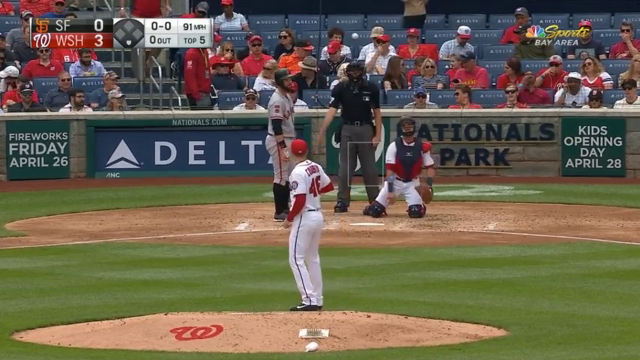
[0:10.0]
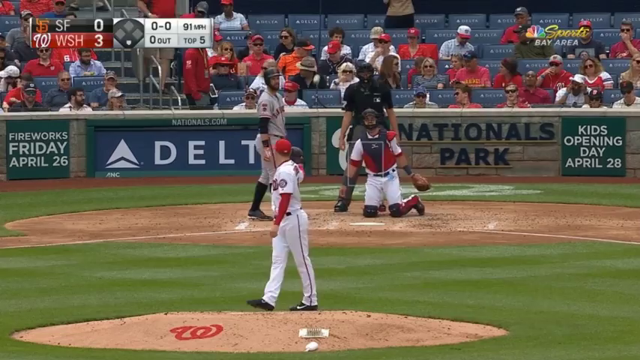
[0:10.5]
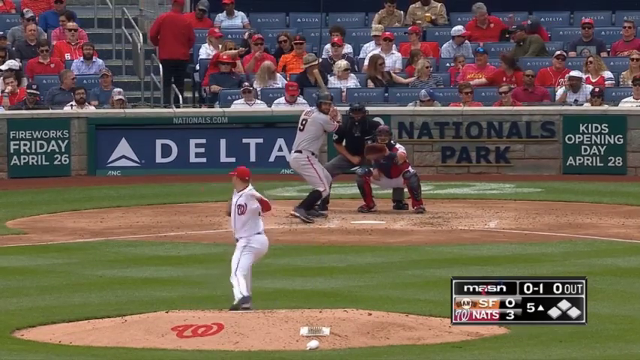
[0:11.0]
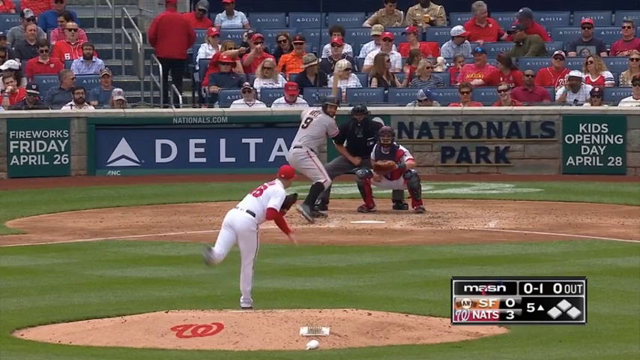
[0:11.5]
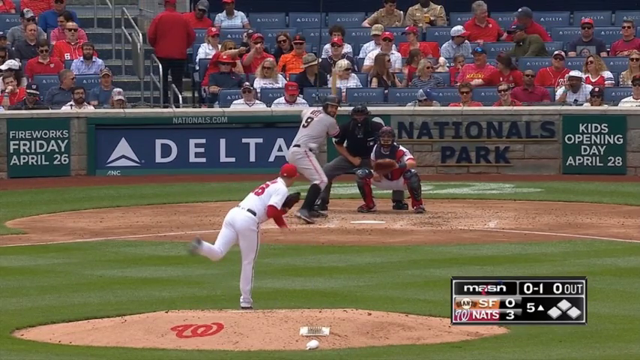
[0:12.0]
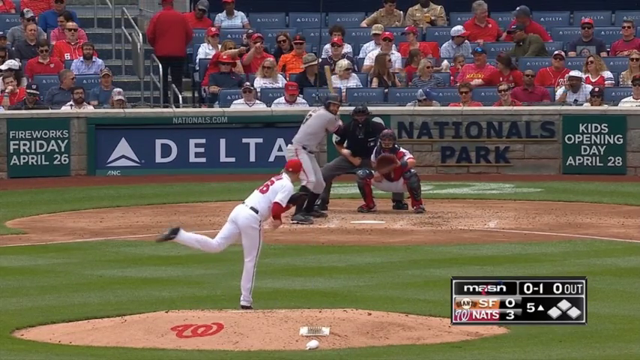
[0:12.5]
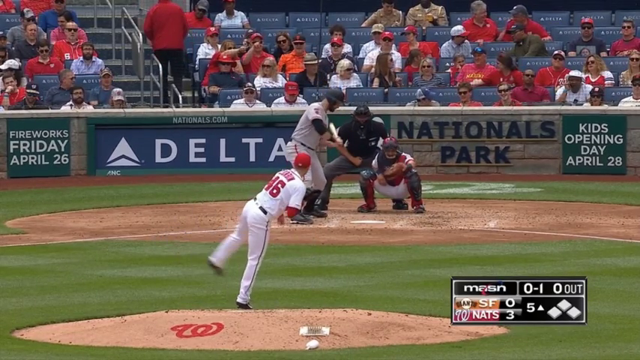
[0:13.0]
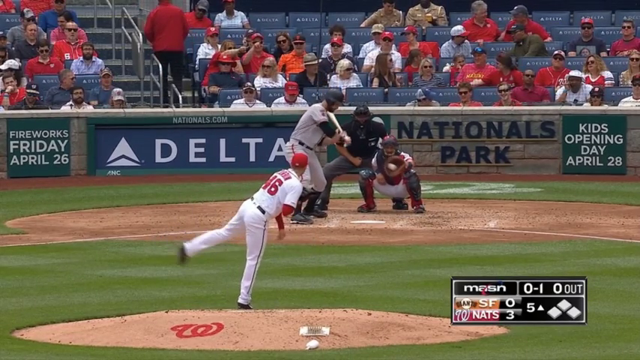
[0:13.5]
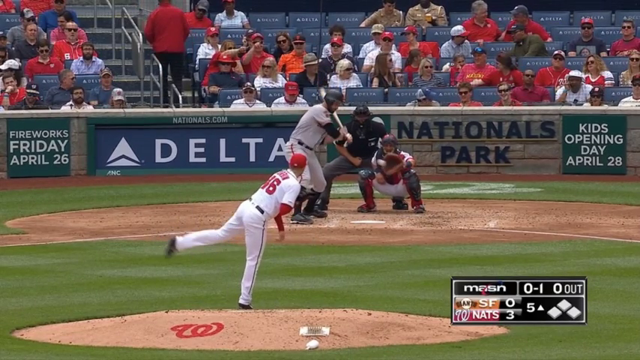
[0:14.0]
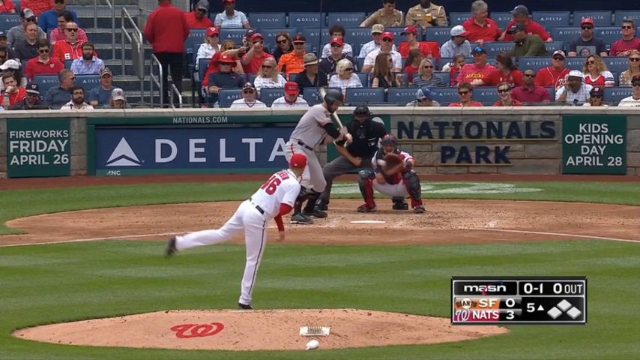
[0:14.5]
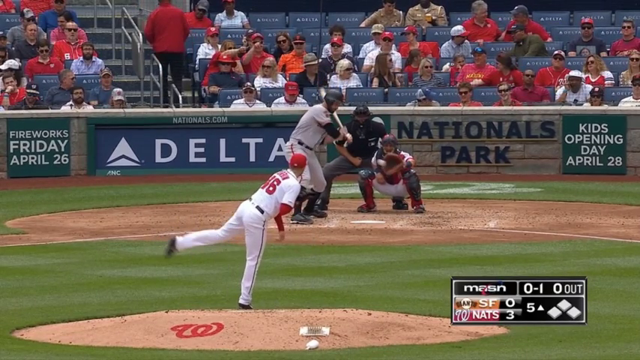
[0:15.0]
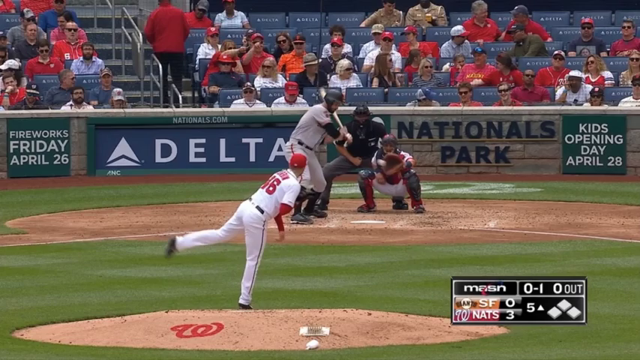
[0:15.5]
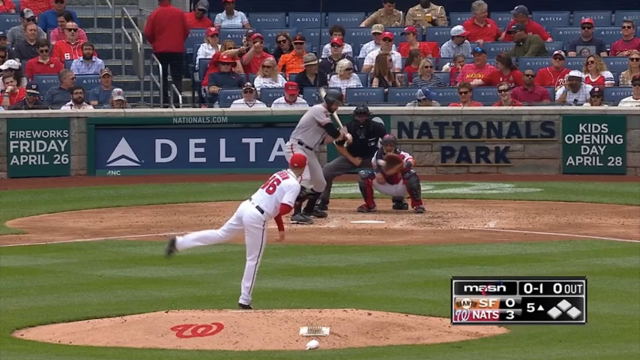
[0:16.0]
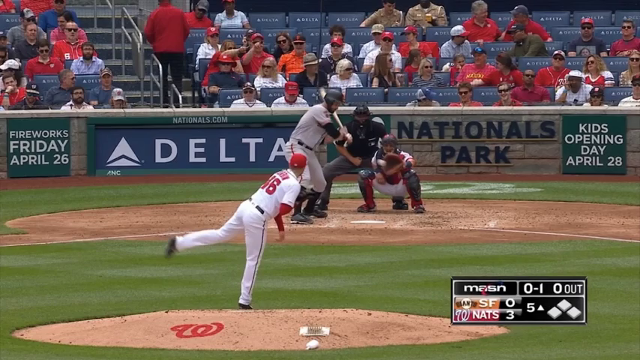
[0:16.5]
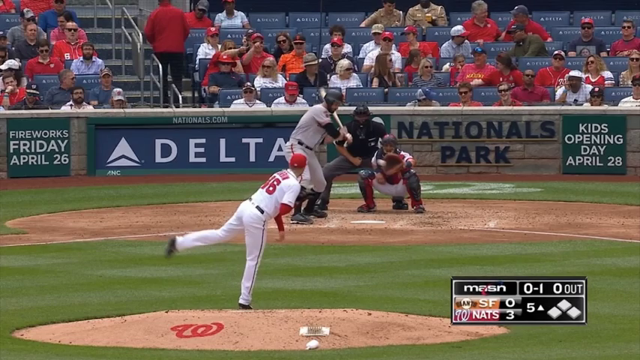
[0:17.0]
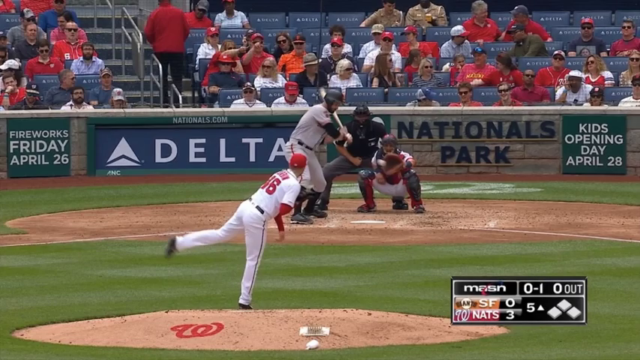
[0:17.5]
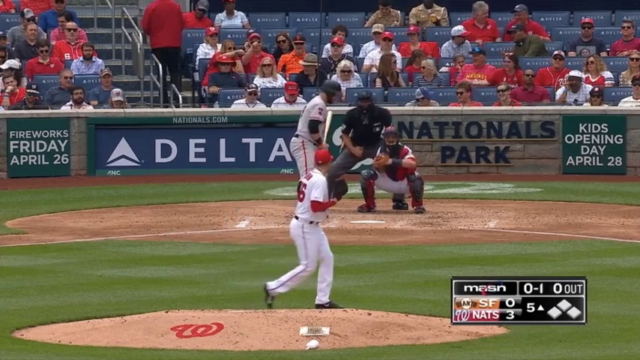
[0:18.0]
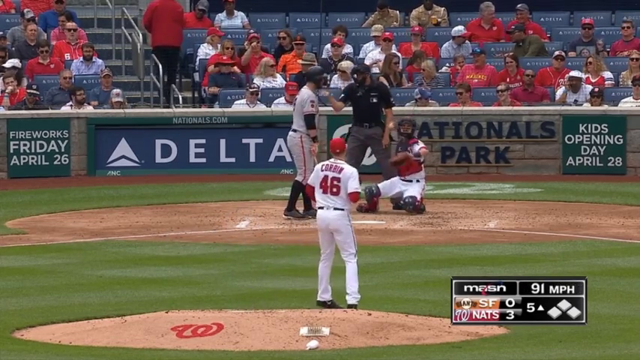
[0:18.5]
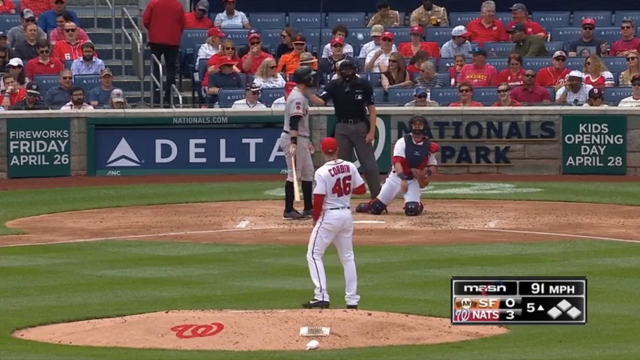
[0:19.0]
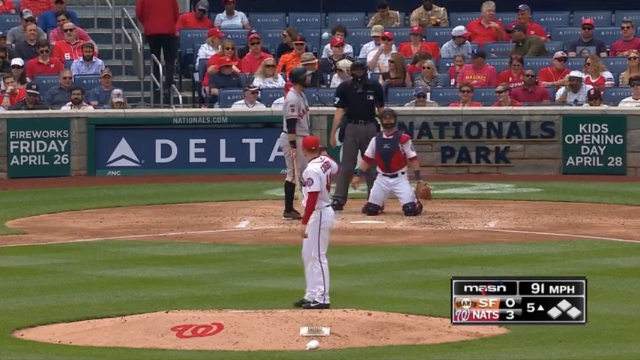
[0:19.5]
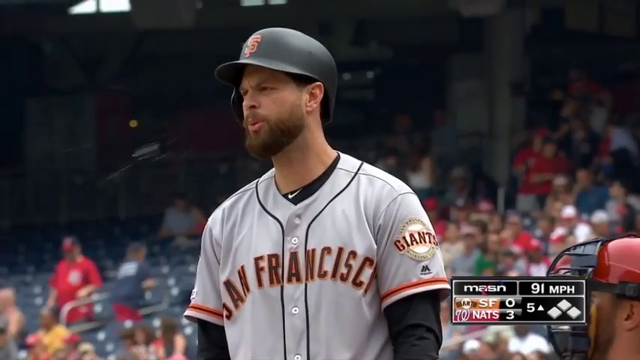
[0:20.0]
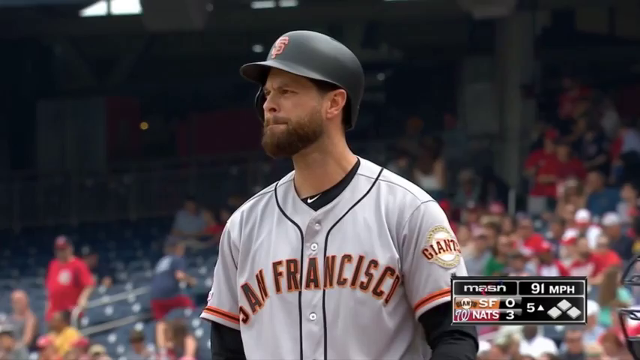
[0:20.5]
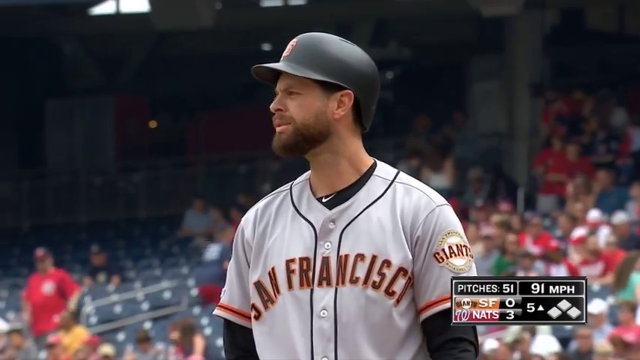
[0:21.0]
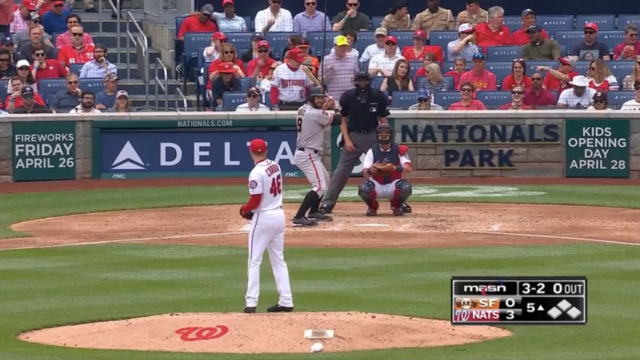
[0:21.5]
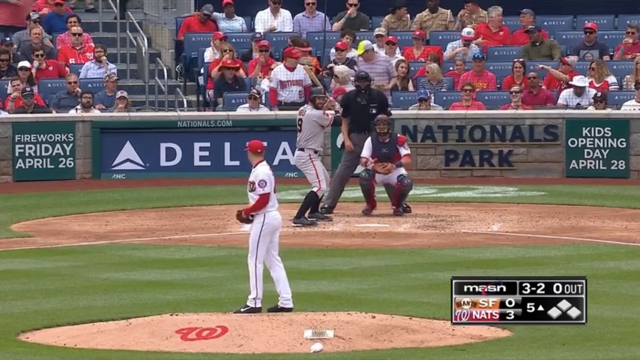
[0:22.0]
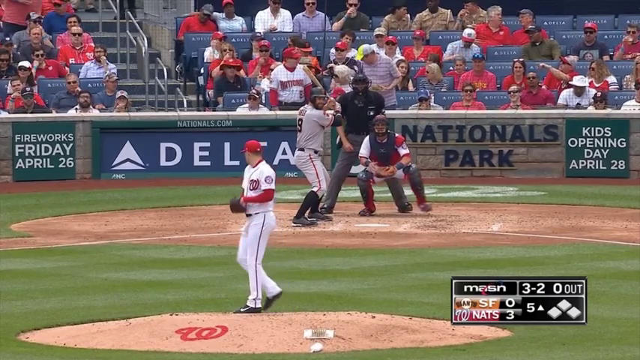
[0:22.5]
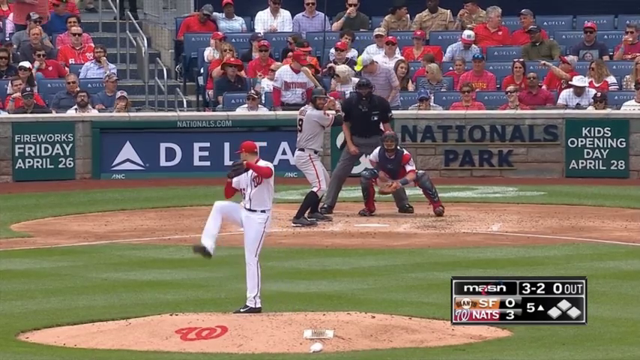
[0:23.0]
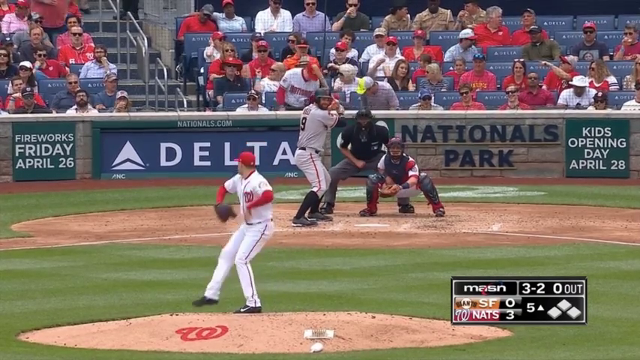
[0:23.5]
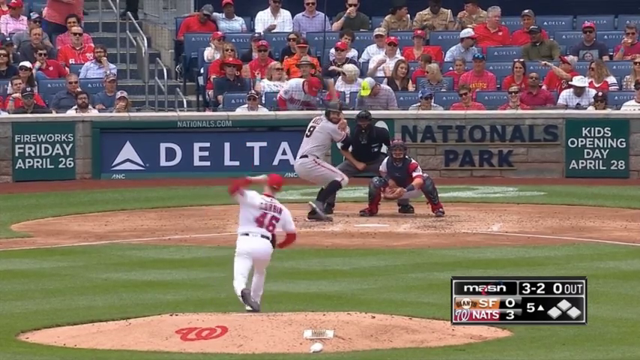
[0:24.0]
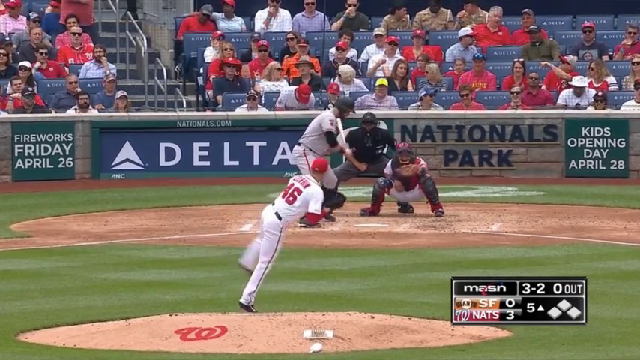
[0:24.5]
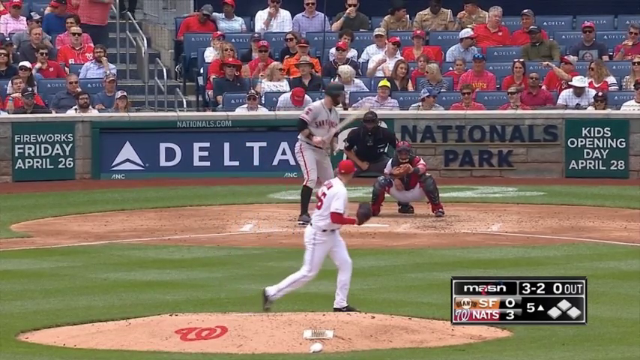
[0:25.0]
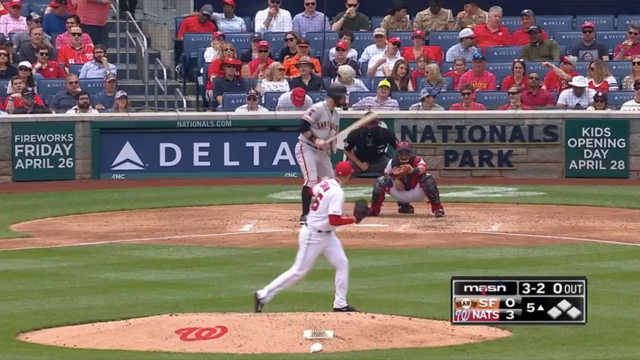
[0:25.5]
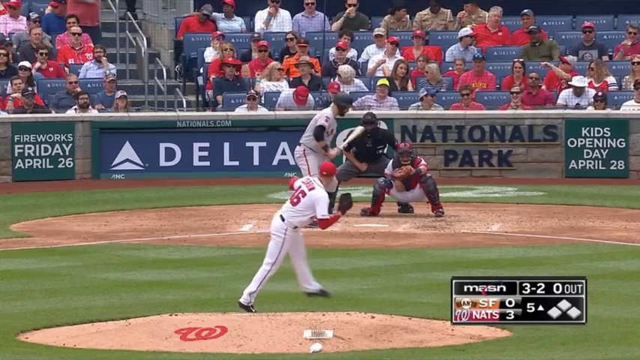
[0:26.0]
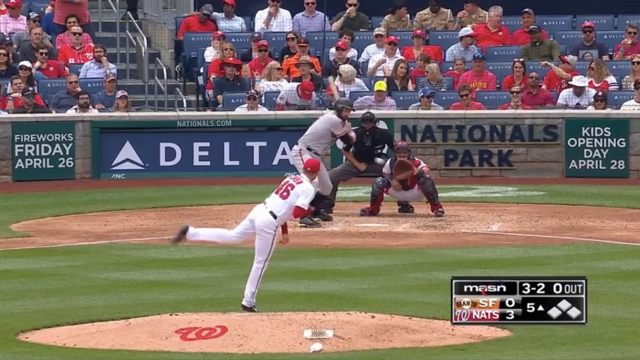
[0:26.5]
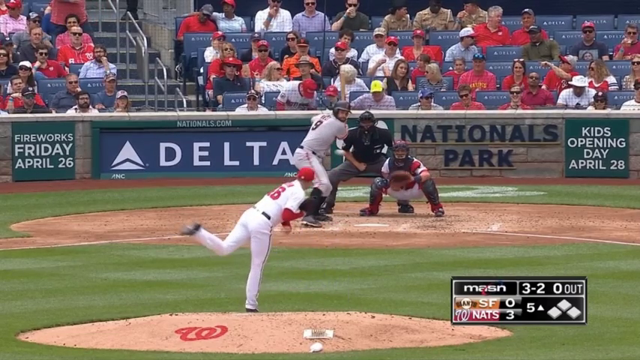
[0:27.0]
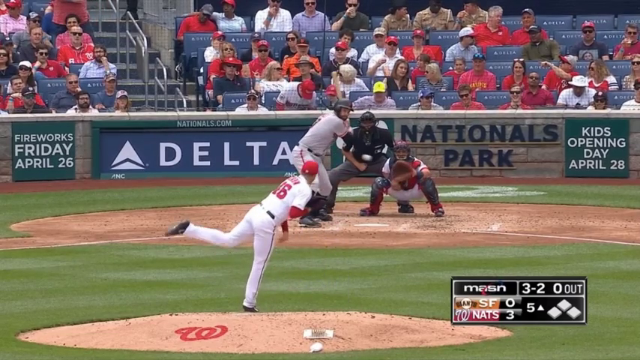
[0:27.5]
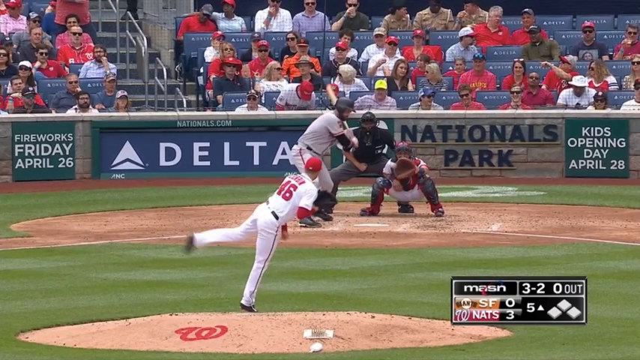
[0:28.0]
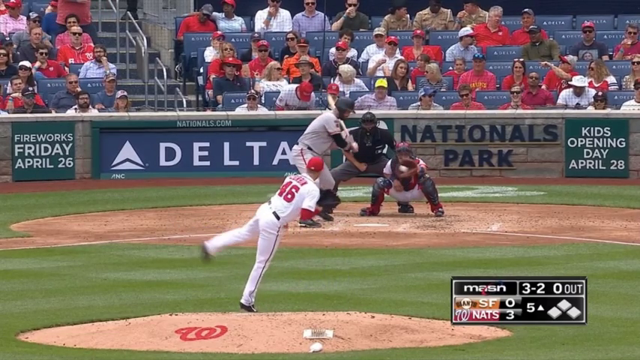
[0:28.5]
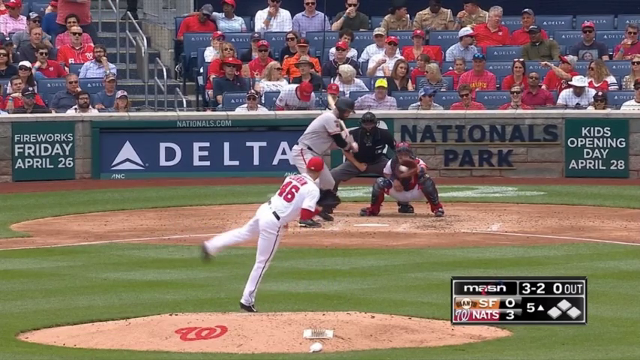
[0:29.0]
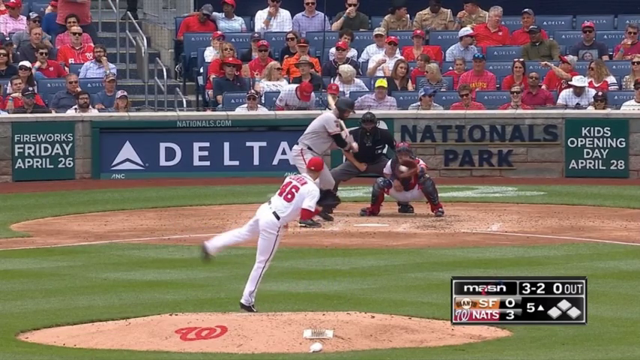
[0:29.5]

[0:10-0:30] The pitcher, apparently number 46, Corbyn, pitches the ball and it goes into the catcher's gloves. The SF batter in the beige outfit does not hit the ball. The score is still 0 for SF and 3 for WSH, the team with red caps. There is an advertising board for Delta, an advertisement for a fireworks display on Friday the 26th of April, and one for a kids' opening day on April 28th. The person behind the catcher, apparently a referee, wearing a black helmet, stands up. The stadium looks well maintained, with nicely mown grass. The footage is from Sports Bay area.